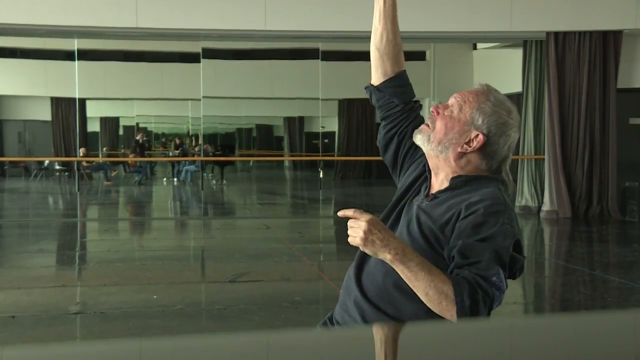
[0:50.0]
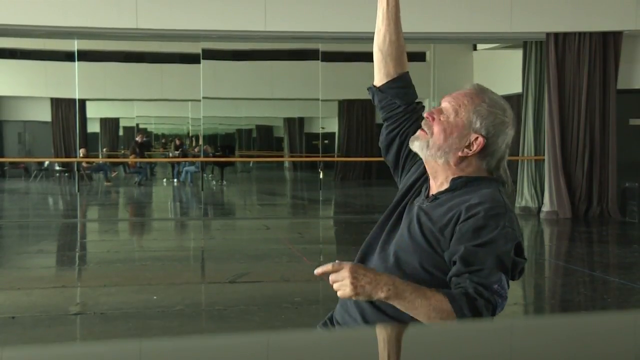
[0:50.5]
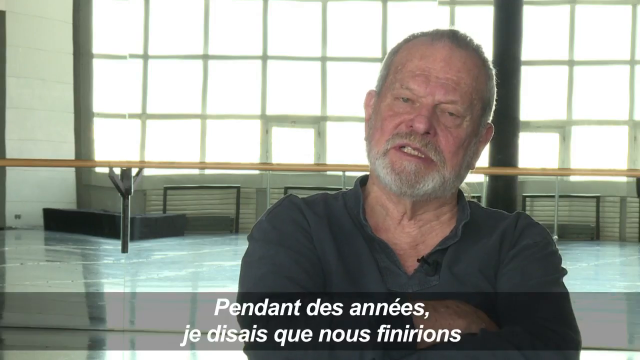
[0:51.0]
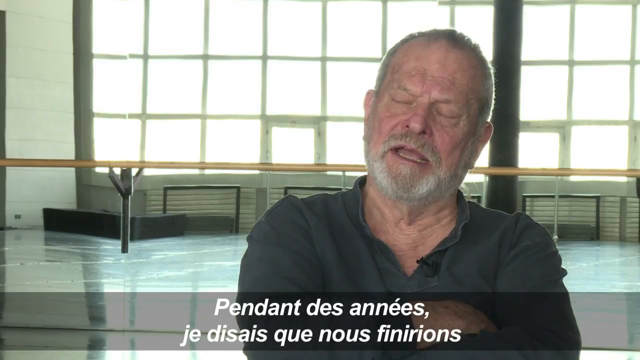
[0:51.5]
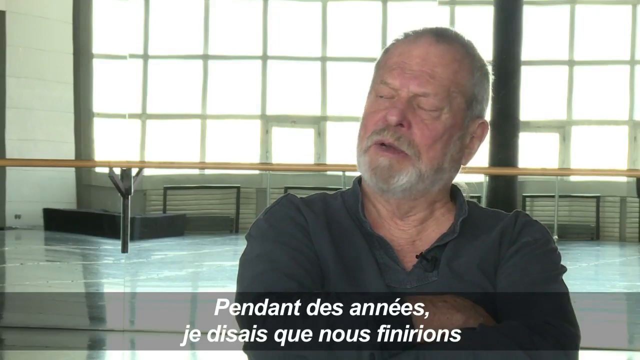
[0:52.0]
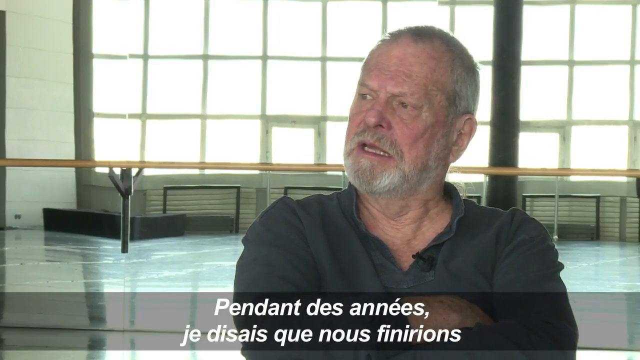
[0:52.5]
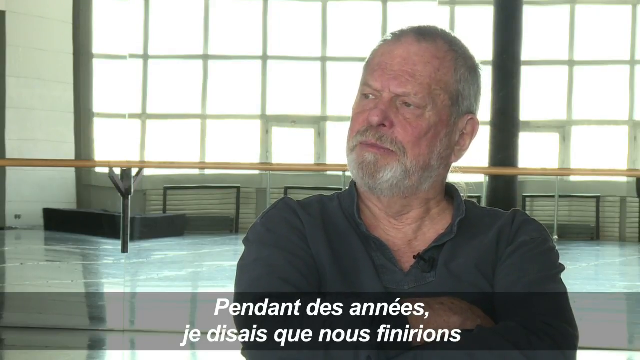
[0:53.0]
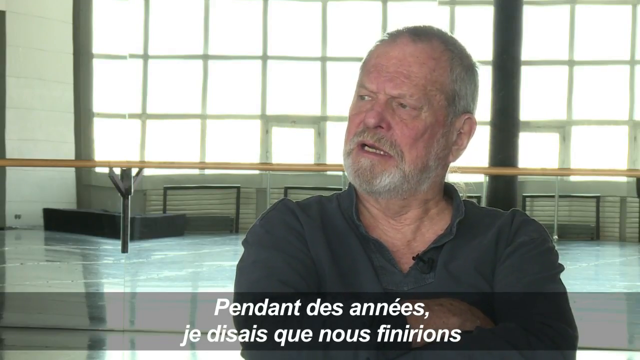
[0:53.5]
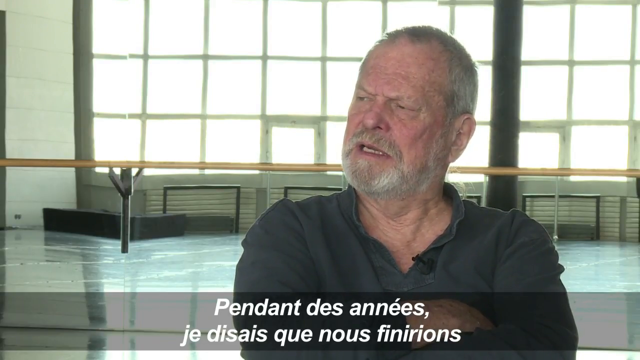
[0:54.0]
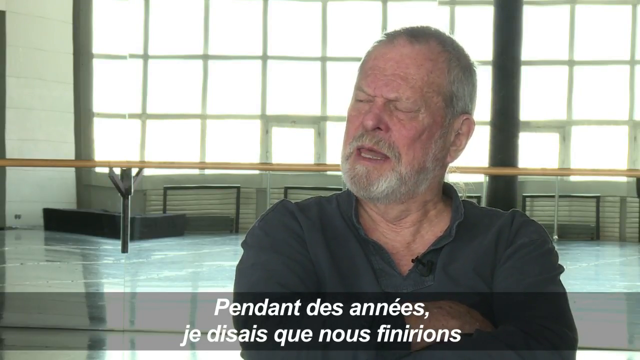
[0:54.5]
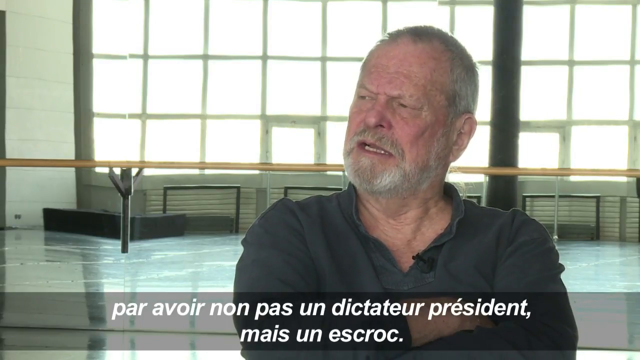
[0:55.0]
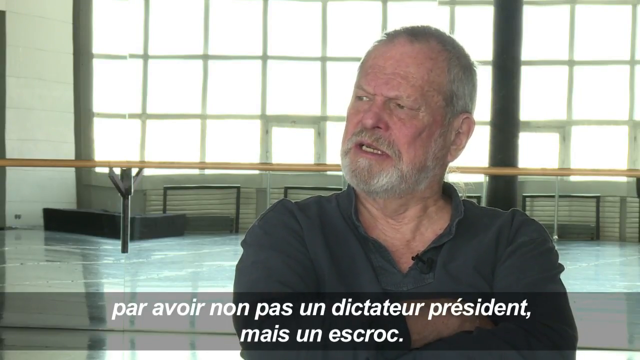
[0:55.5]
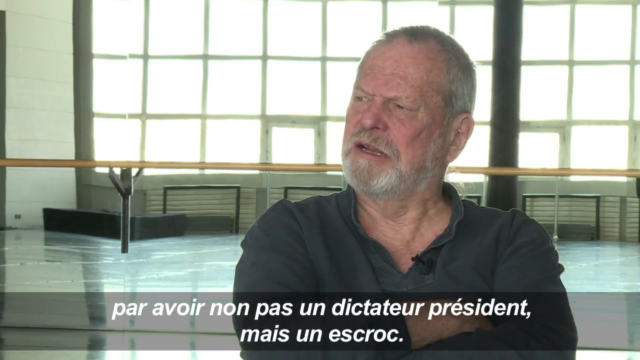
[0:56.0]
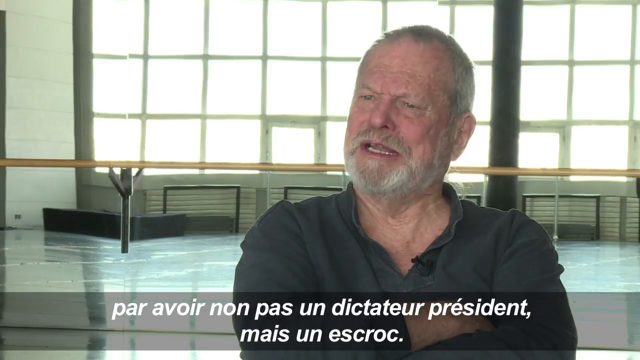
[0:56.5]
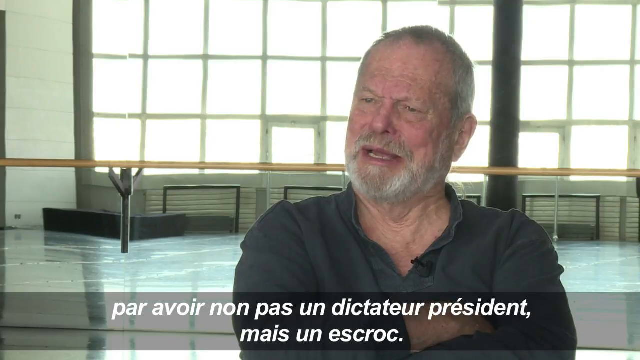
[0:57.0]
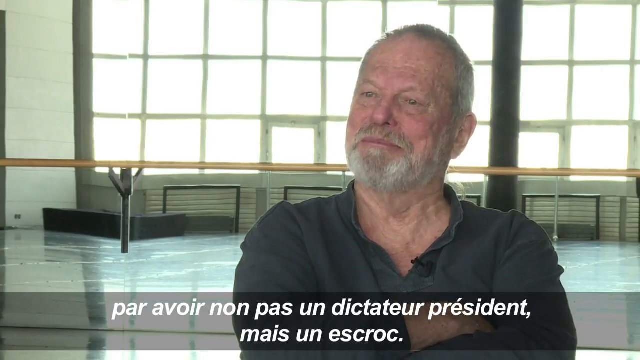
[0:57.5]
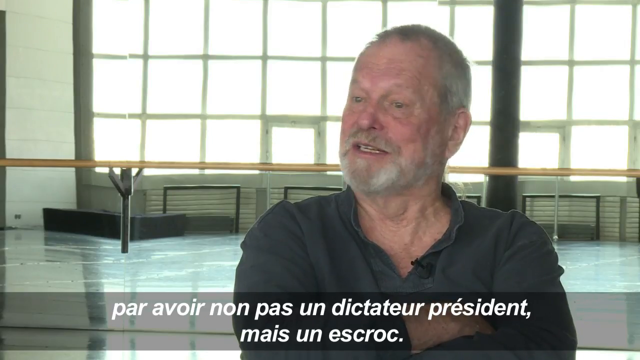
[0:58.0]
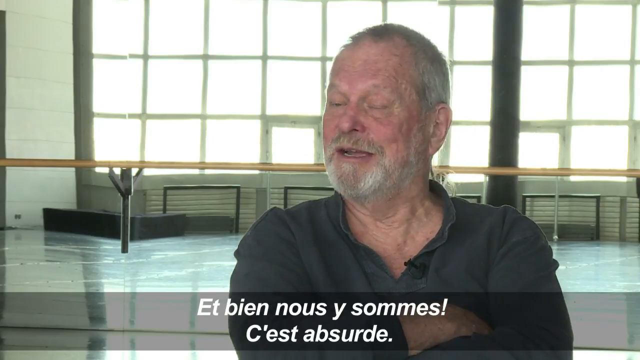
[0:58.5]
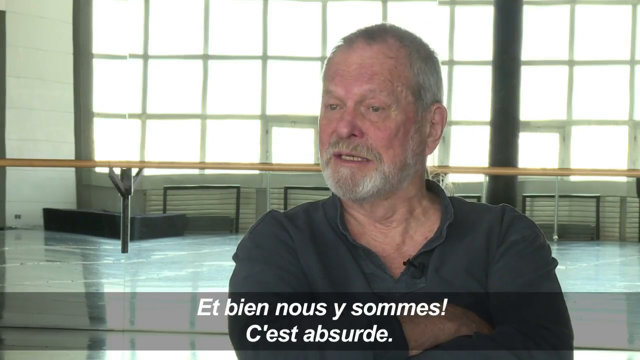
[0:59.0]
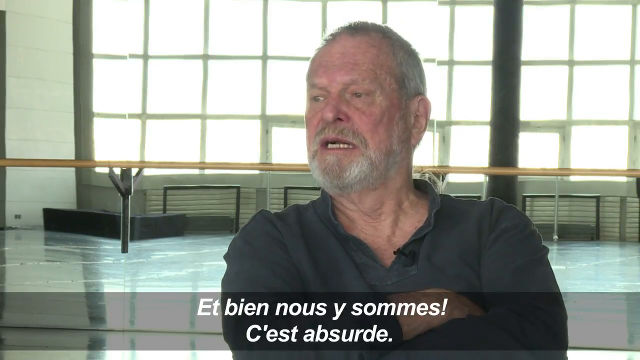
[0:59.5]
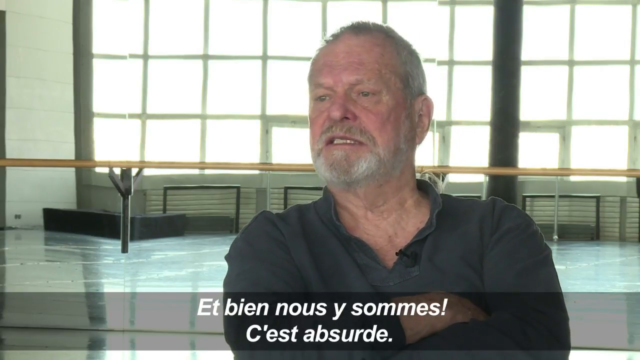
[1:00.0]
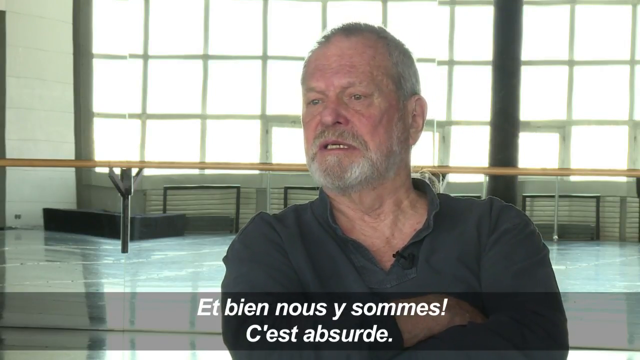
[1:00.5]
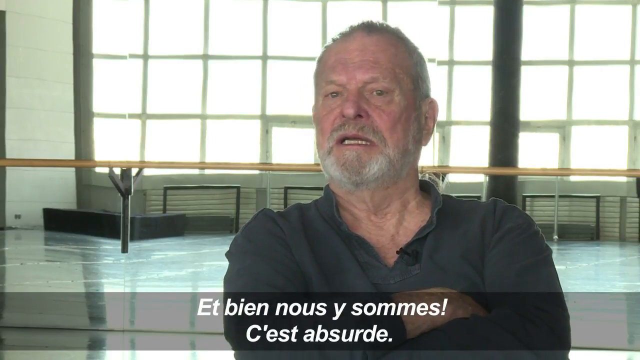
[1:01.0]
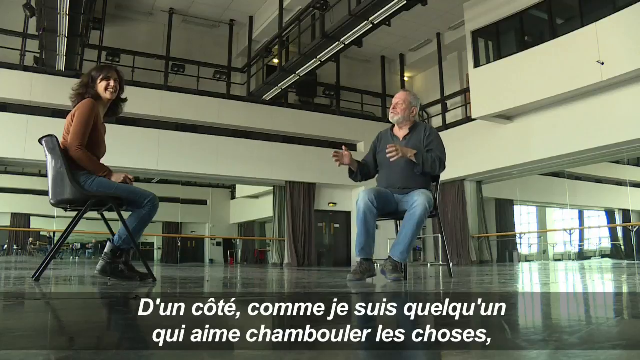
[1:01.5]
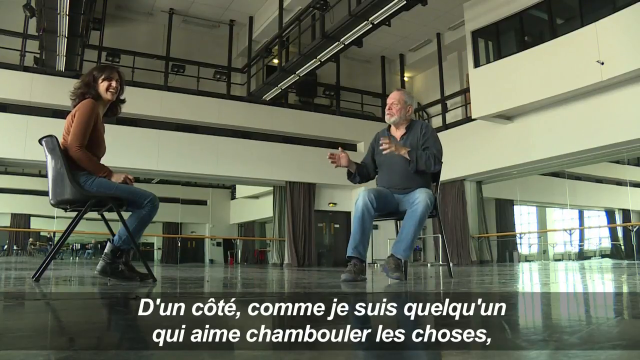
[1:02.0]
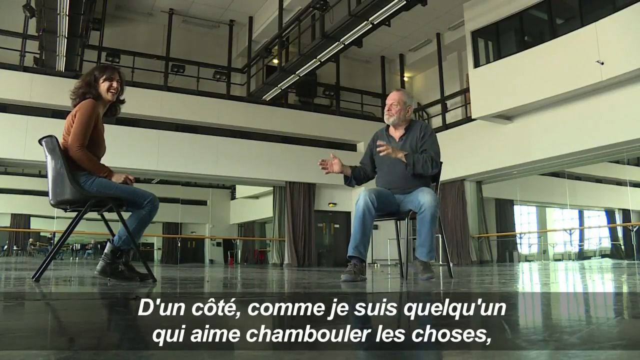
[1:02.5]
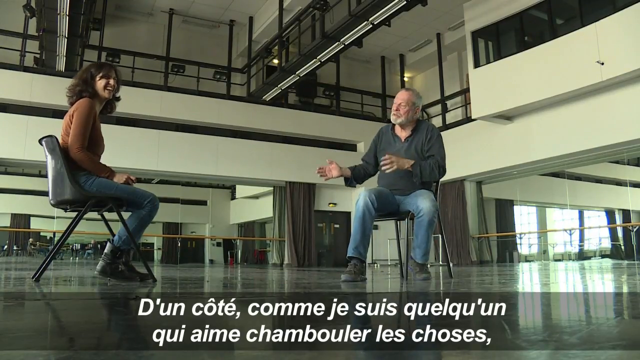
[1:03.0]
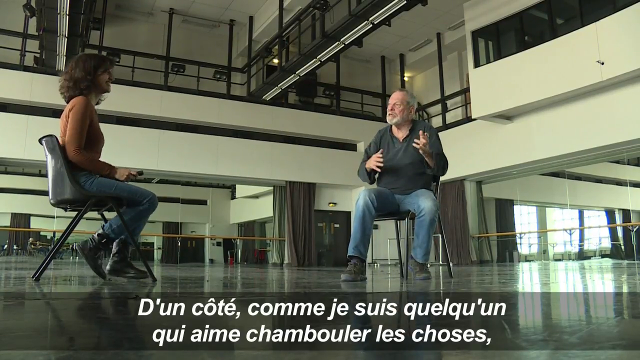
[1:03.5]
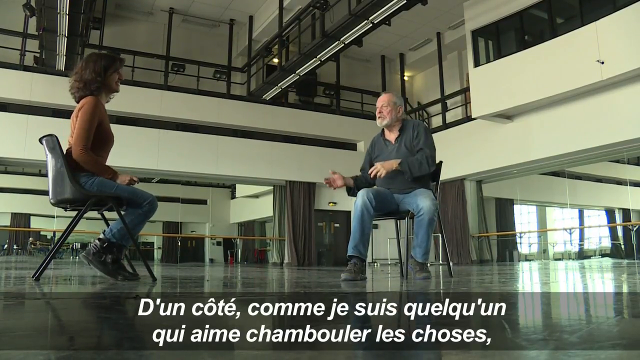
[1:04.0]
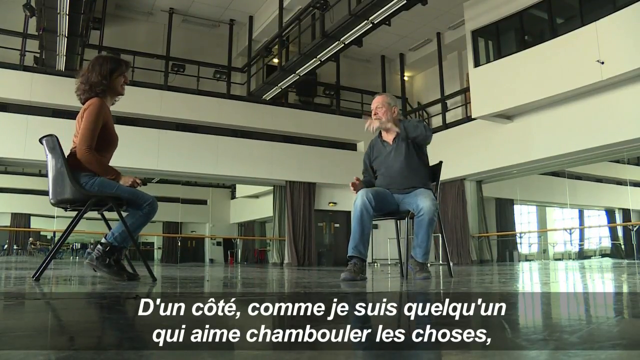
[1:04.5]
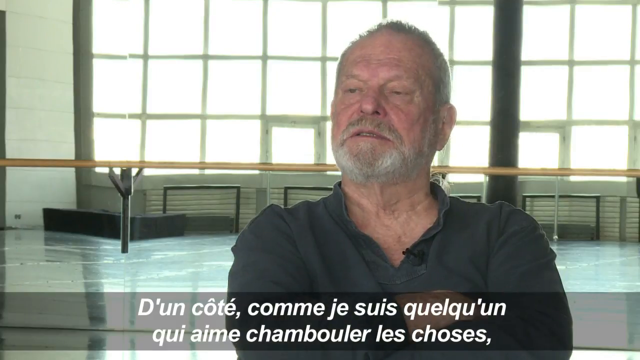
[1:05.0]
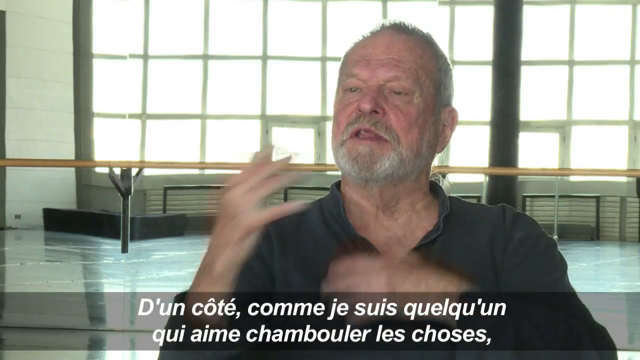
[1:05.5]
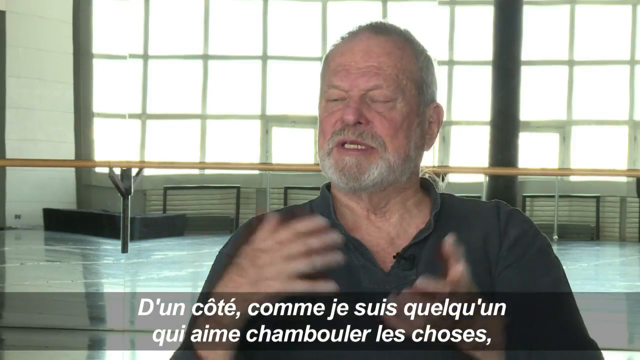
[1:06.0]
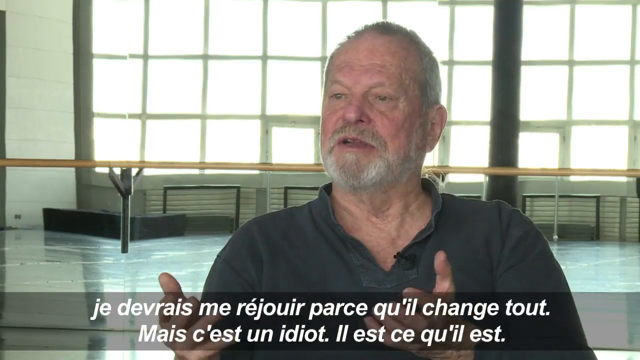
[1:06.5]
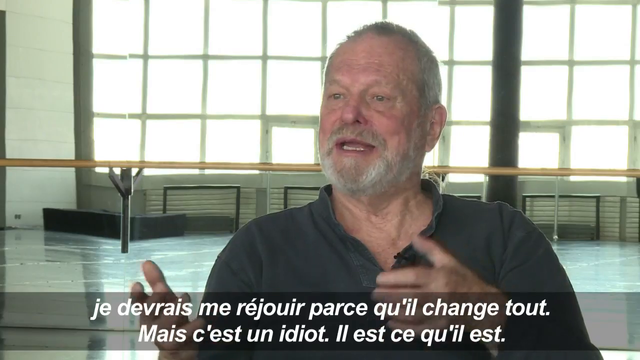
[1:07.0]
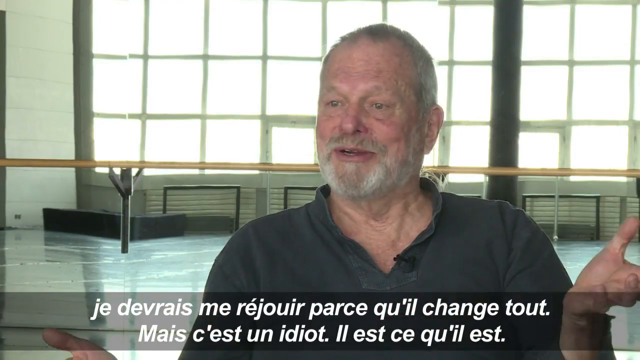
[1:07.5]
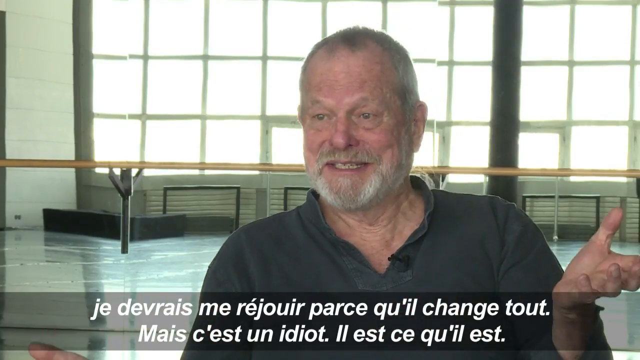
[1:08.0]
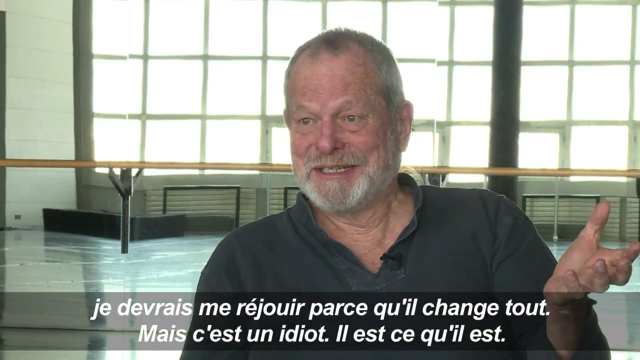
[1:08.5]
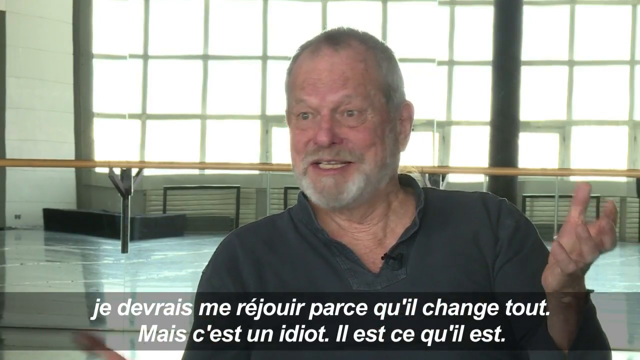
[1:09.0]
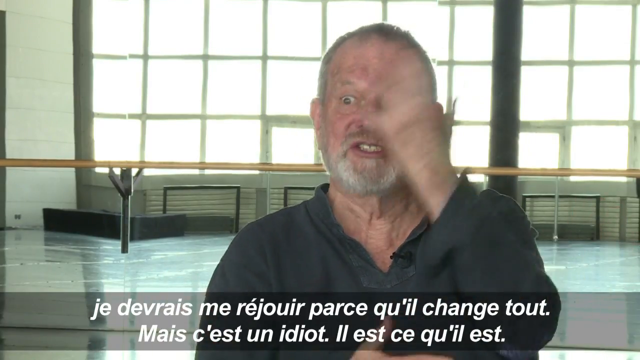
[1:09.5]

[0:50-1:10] The man points straight up and looks at what he is pointing toward, then the shot quickly changes back to a straight-on view of him from the chest up. He continues to speak, looking to the left at one point, nodding up and down, and quickly shaking his head back and forth. Briefly, a zoomed-out view shows his full body as he sits in a chair wearing blue jeans, being interviewed by the woman. The shot then returns to the close-up. In a couple of moments he is very vibrant, really speaking with his hands.